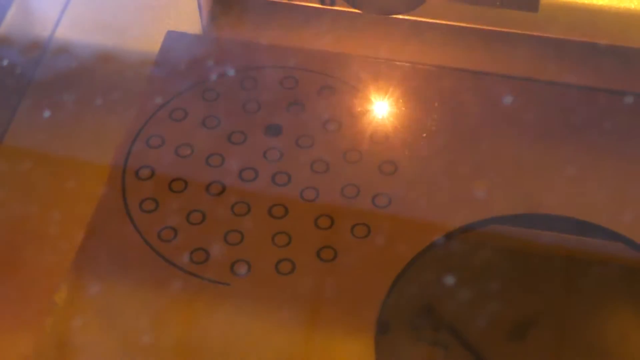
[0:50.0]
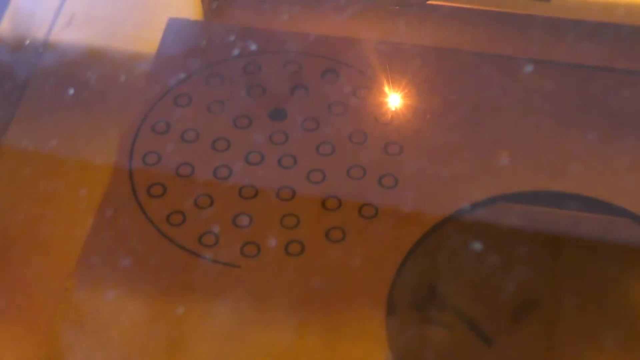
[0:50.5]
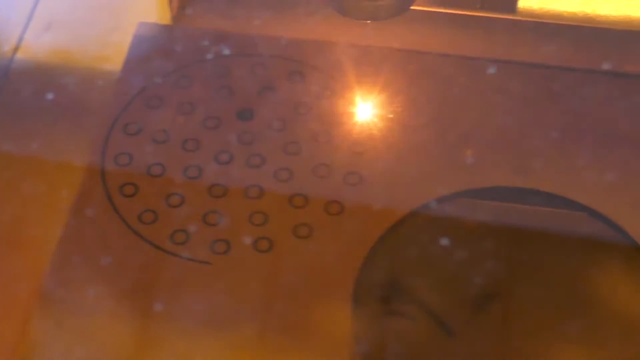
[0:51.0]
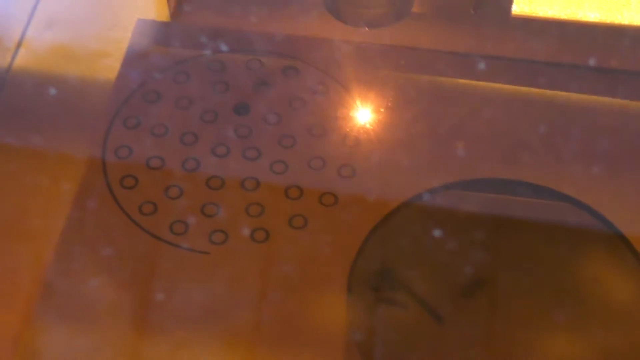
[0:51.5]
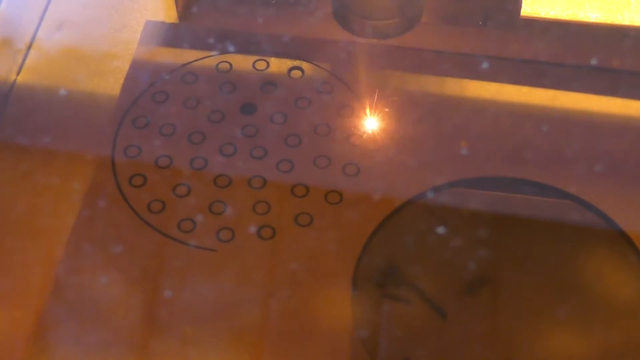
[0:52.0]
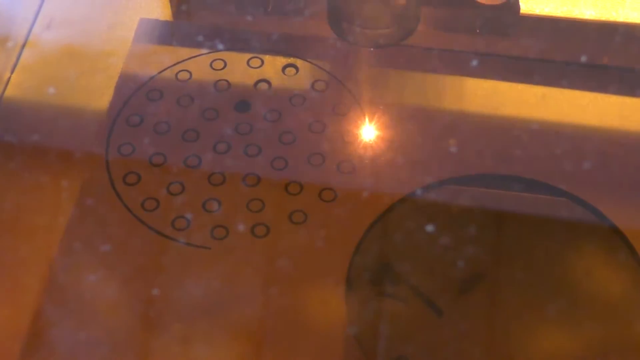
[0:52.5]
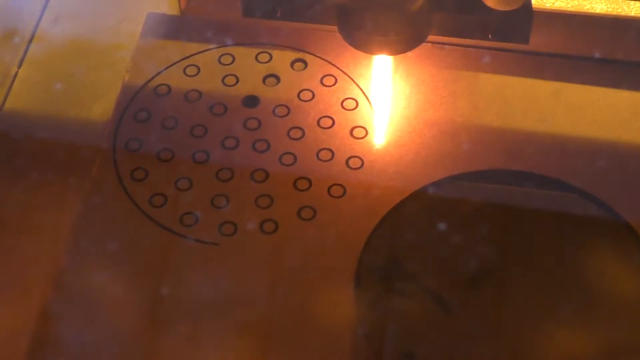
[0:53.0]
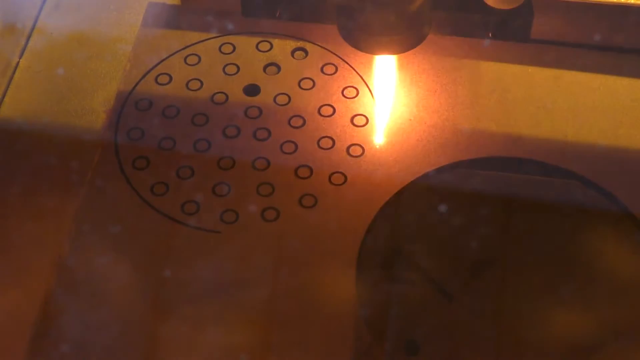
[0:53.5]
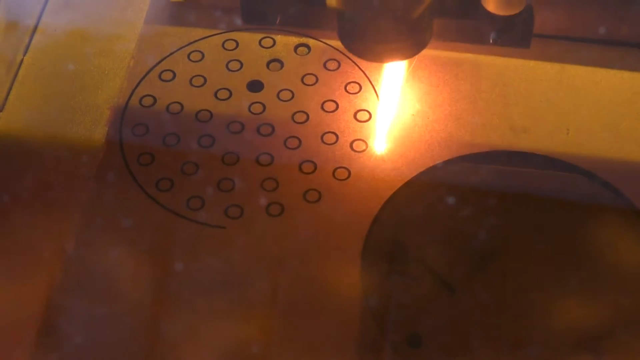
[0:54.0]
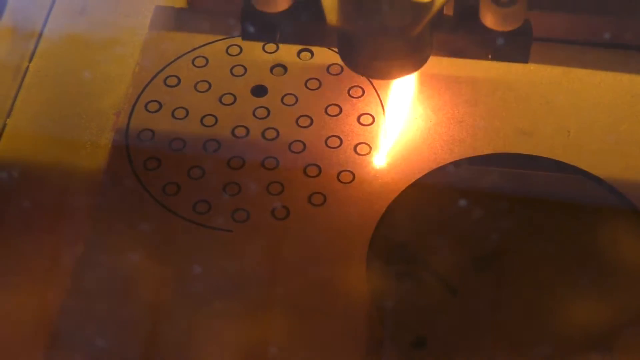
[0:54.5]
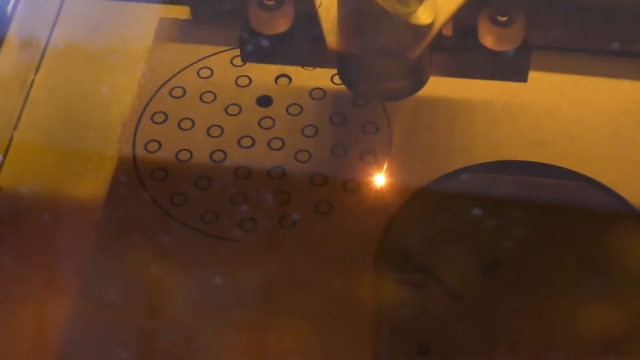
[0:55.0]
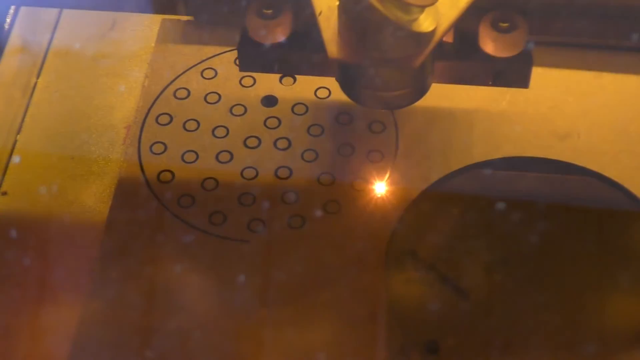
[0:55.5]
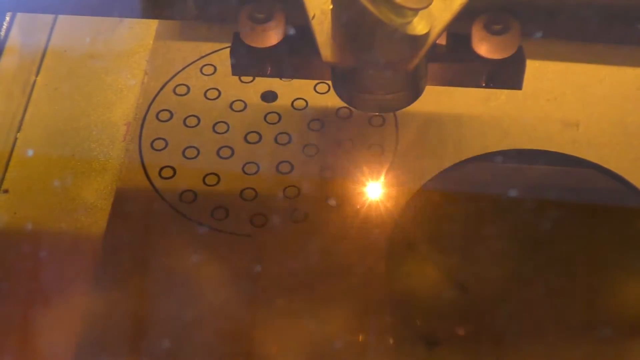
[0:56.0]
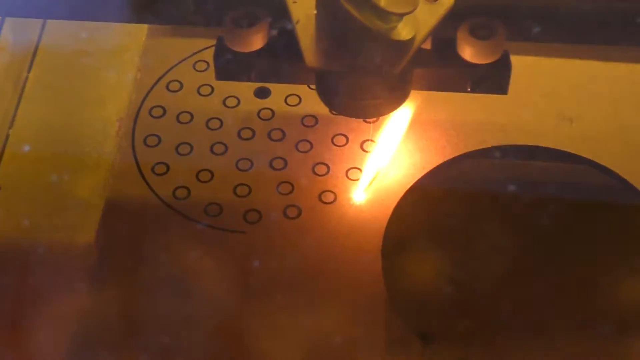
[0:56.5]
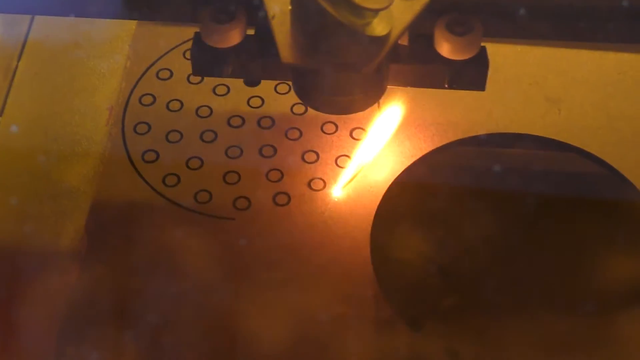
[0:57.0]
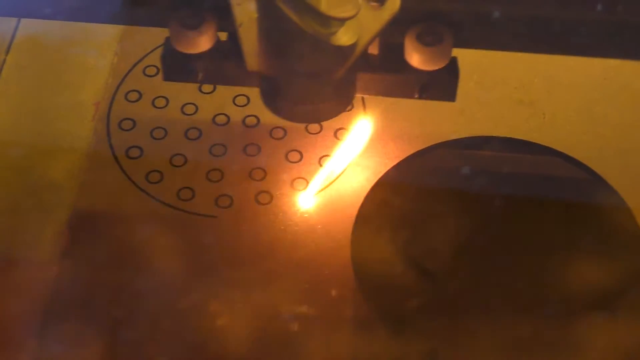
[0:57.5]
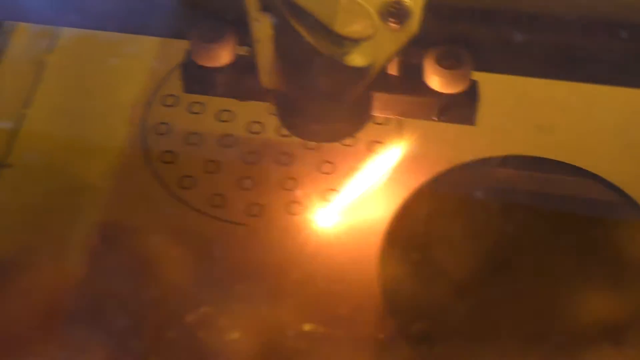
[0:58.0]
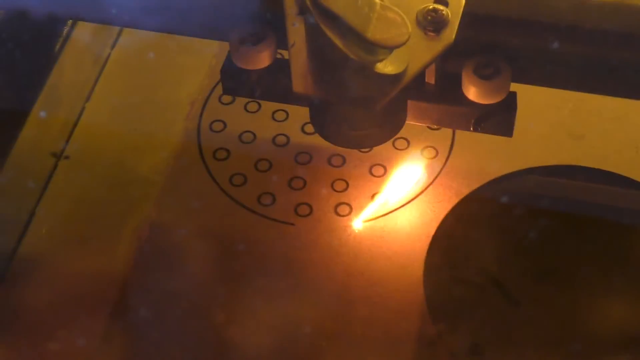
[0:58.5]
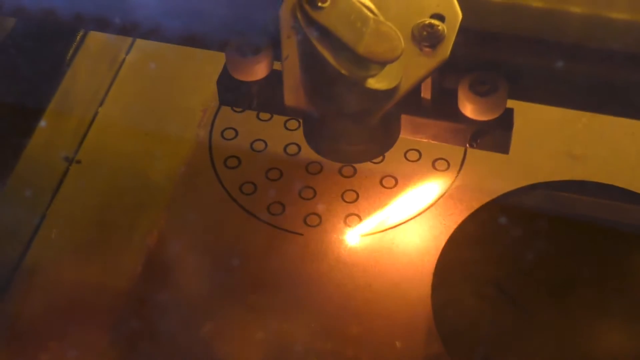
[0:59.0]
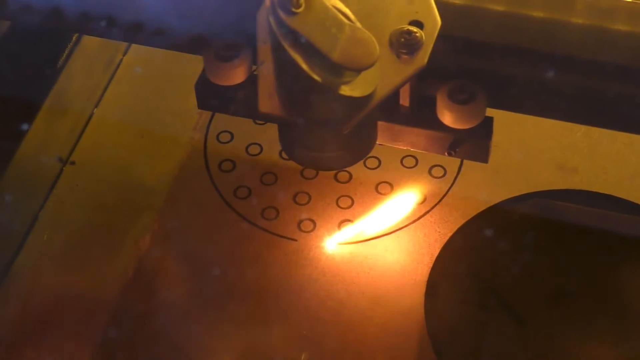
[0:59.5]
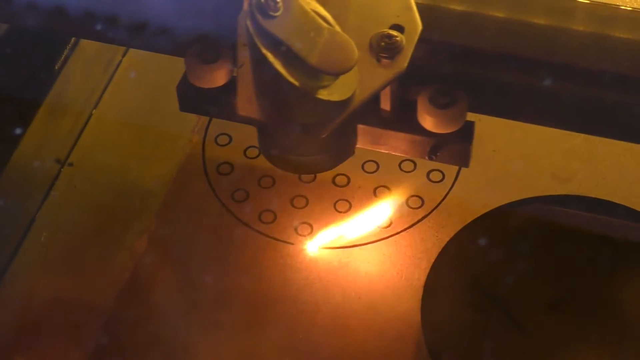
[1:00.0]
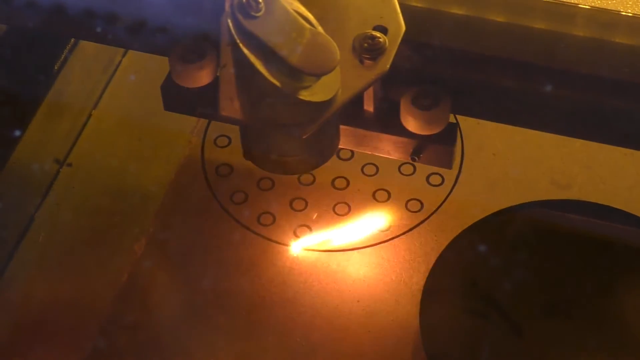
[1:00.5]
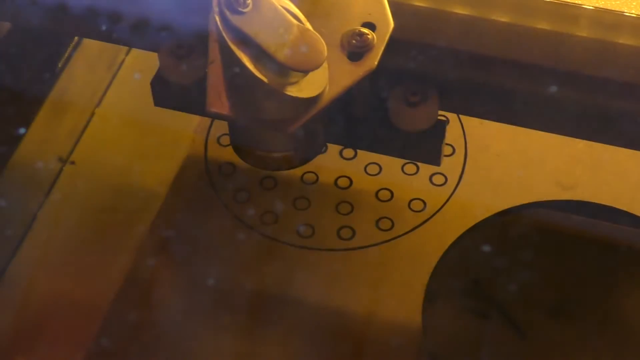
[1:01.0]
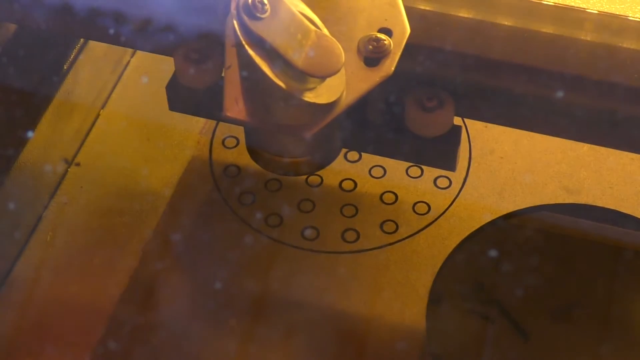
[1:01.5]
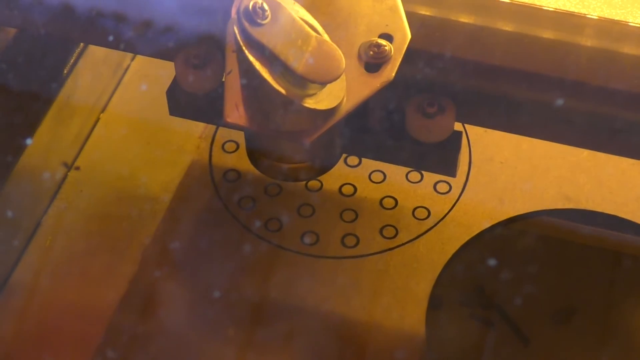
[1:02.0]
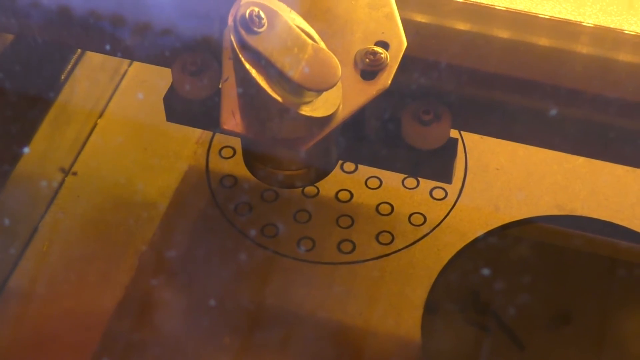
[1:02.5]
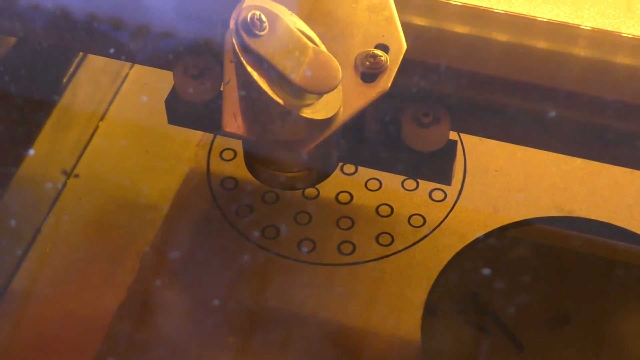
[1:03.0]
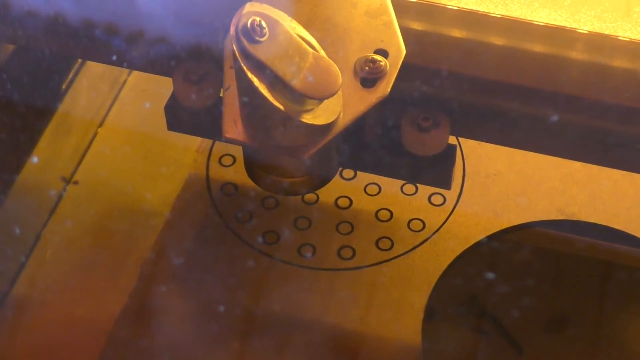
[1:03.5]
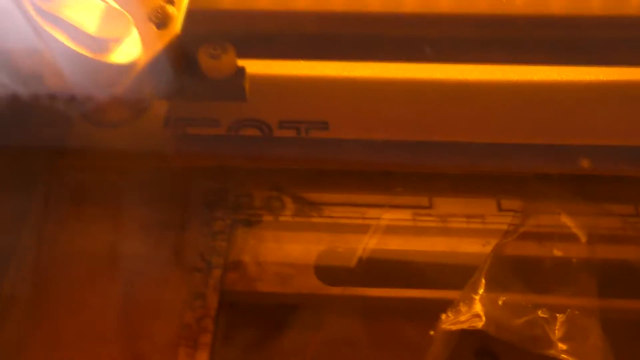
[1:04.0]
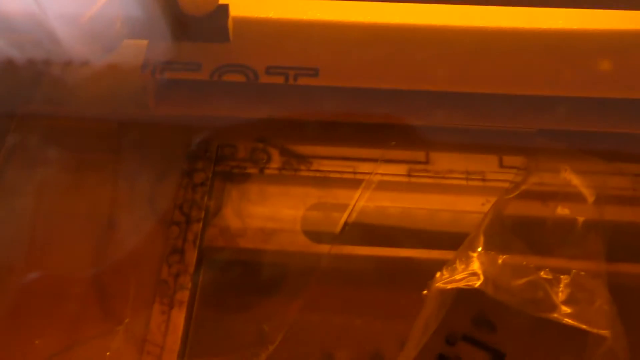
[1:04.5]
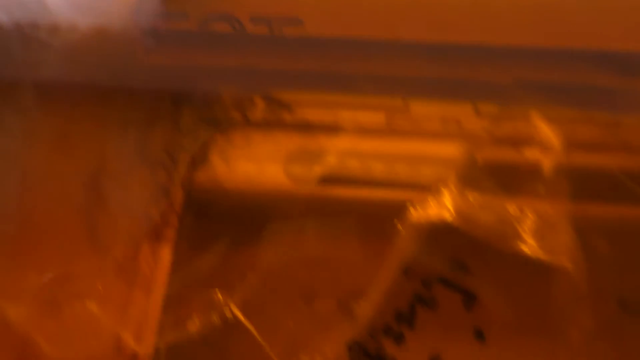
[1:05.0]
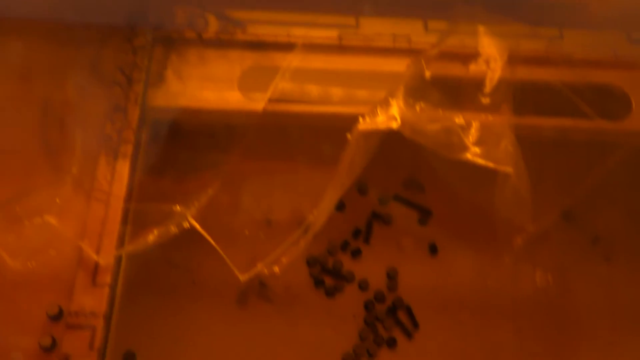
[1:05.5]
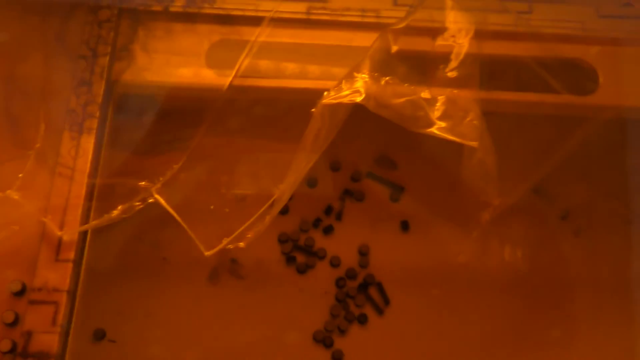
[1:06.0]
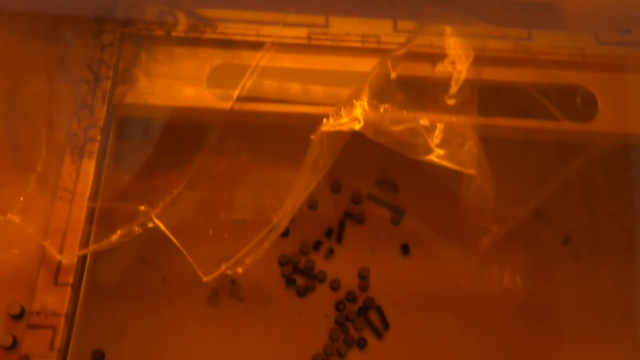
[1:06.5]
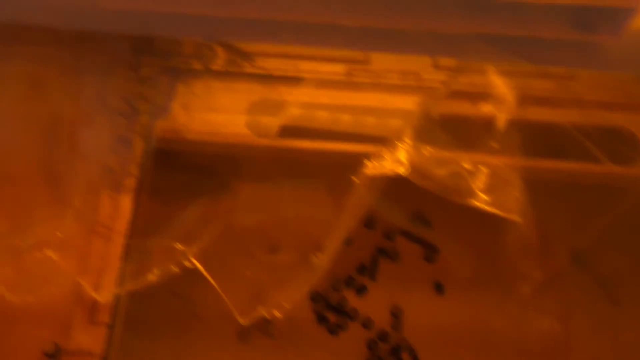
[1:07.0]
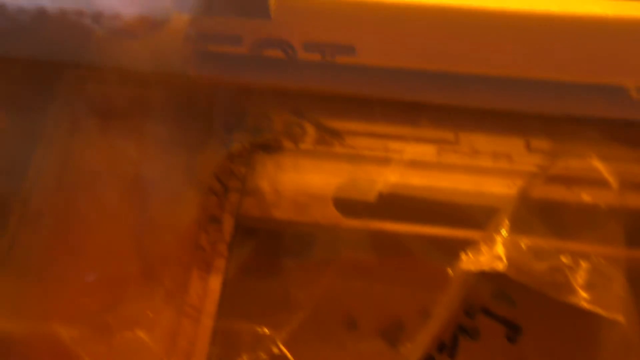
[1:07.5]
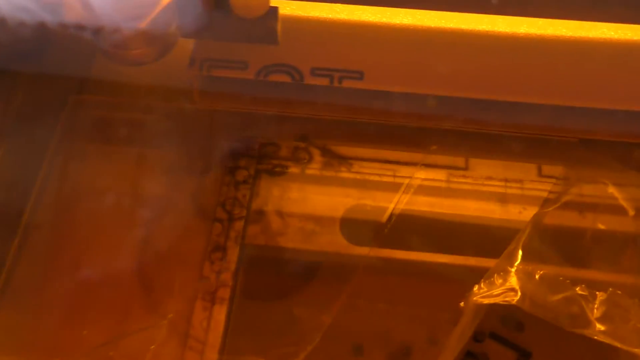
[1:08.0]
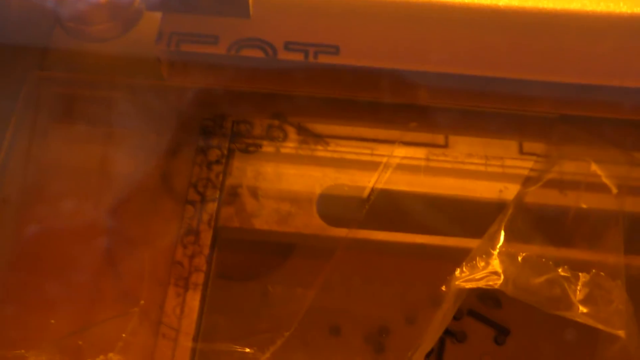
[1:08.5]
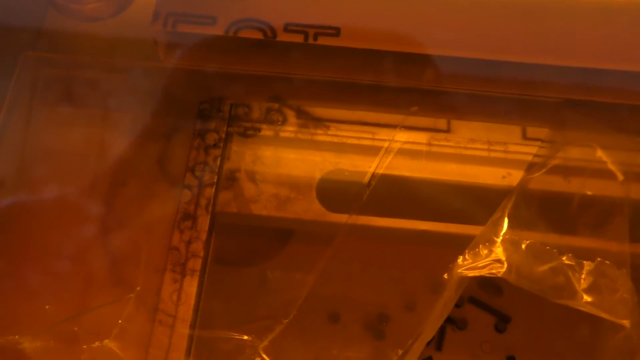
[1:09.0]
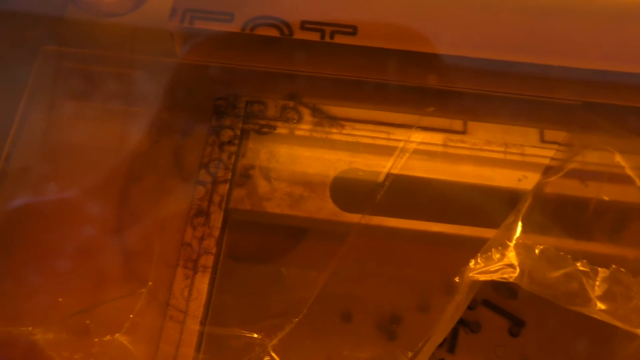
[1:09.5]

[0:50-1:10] The laser or engraving machine goes around, completing the big circle so that all the tiny circles are enclosed within it. There still seems to be glass on top of the machine, blocking a direct view or possibly serving as a protective cover against the flame. The flame keeps going around, creating the outer boundary circle that encloses the small circles made at the start, with the big circle on the outer rim.